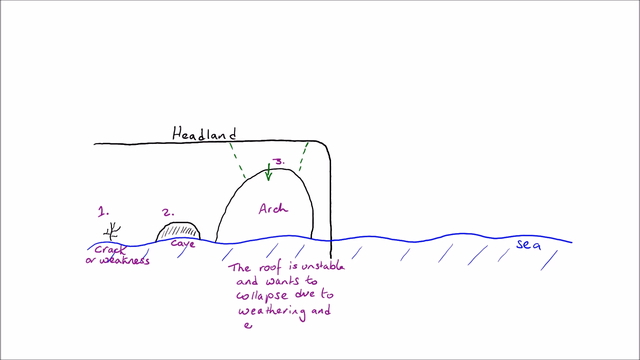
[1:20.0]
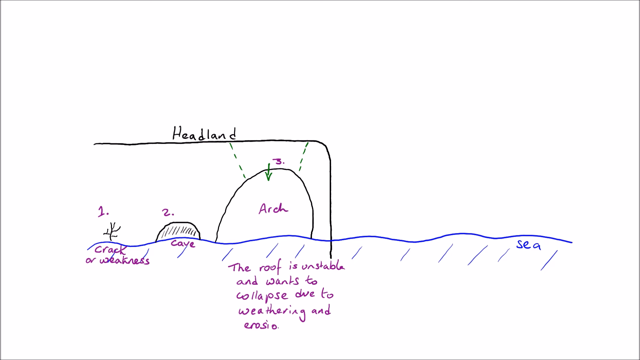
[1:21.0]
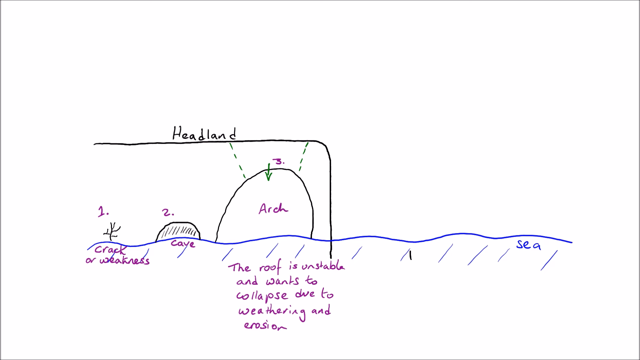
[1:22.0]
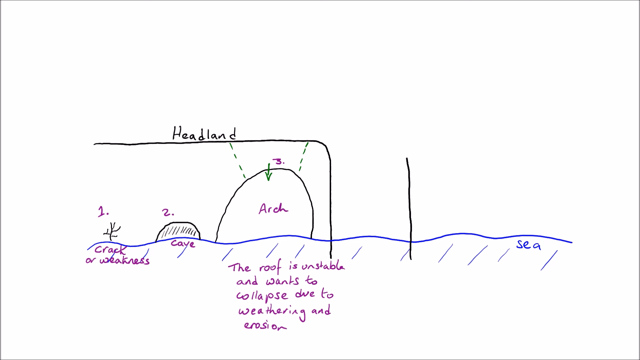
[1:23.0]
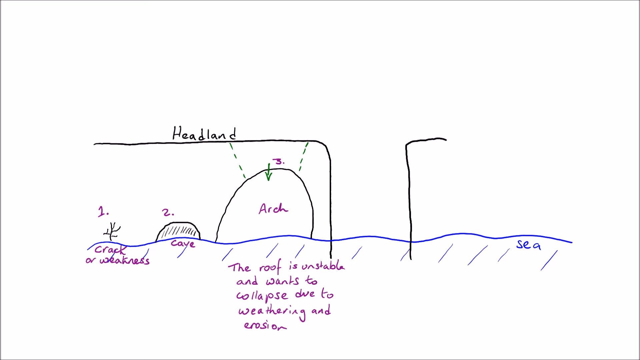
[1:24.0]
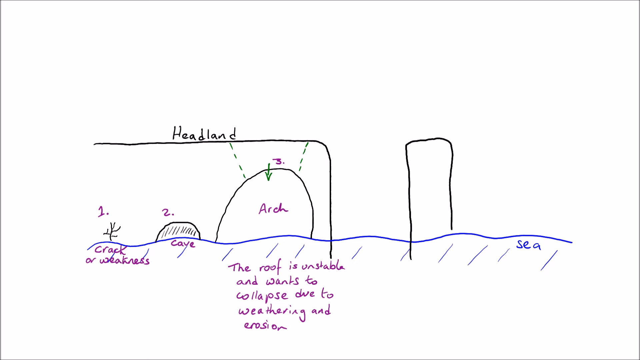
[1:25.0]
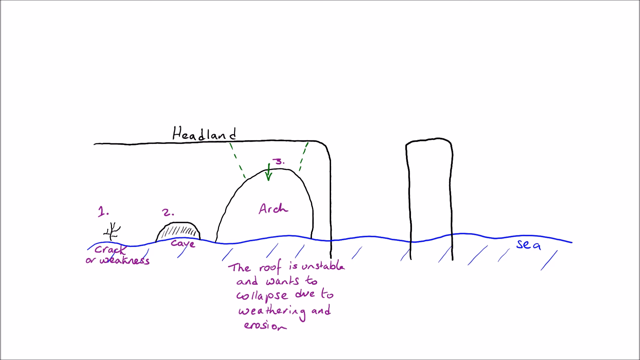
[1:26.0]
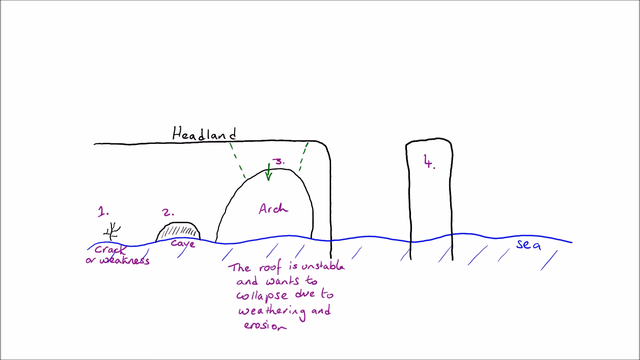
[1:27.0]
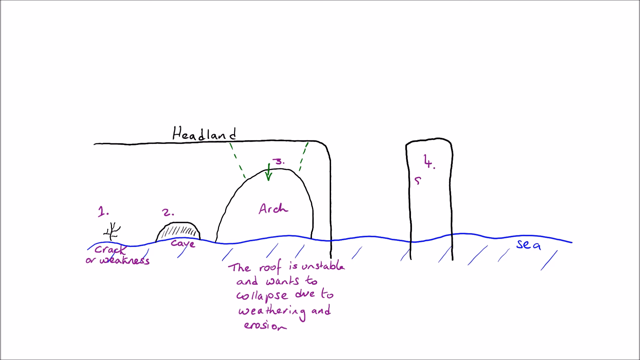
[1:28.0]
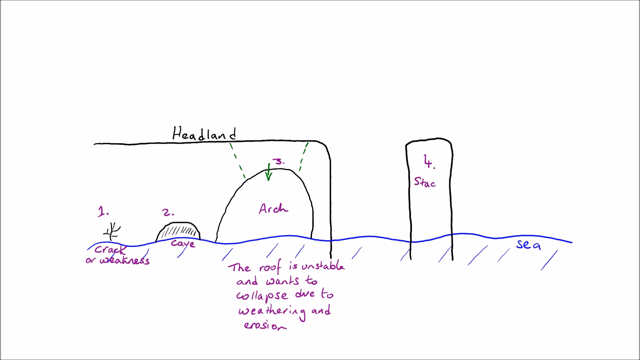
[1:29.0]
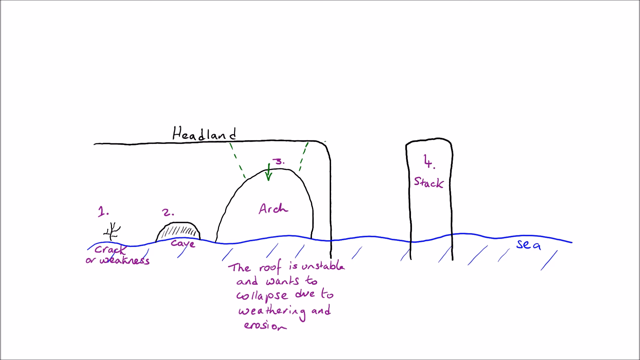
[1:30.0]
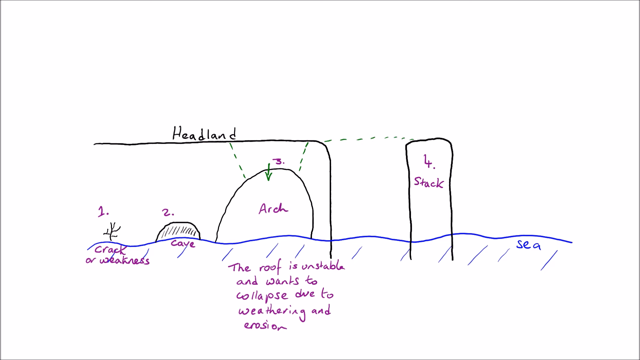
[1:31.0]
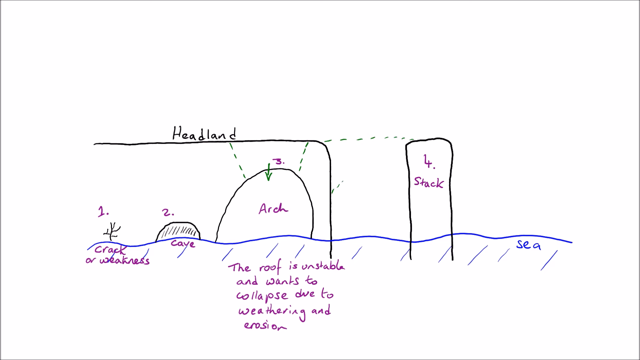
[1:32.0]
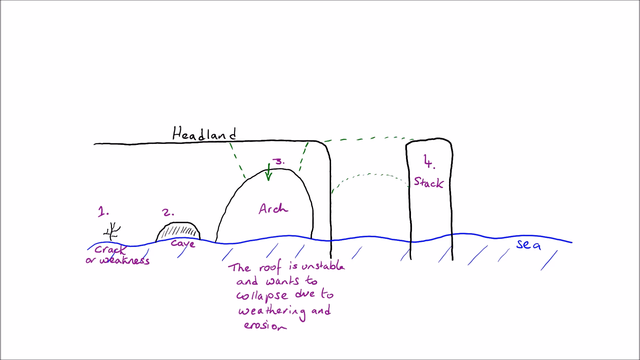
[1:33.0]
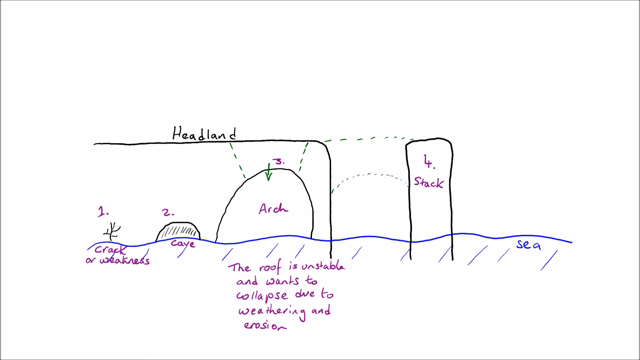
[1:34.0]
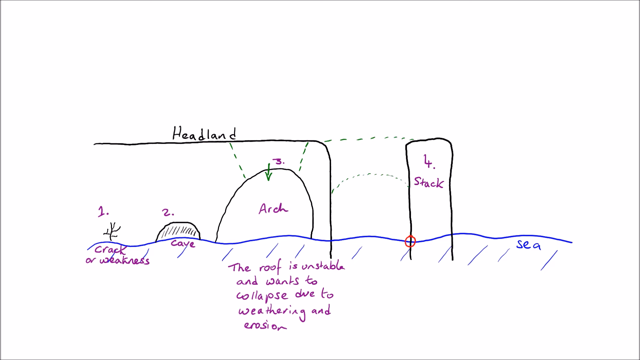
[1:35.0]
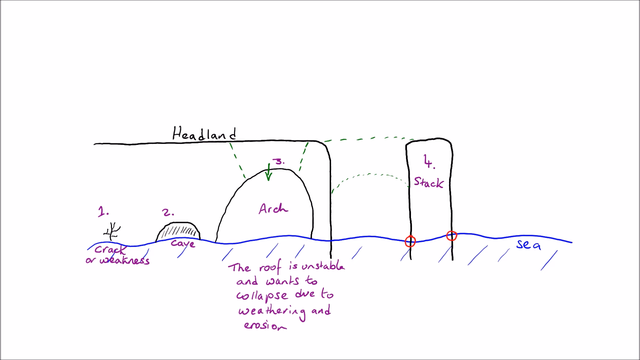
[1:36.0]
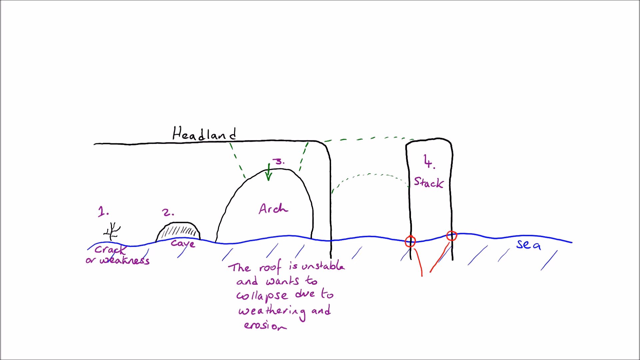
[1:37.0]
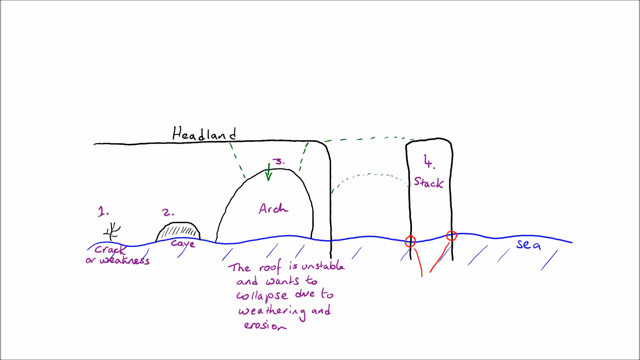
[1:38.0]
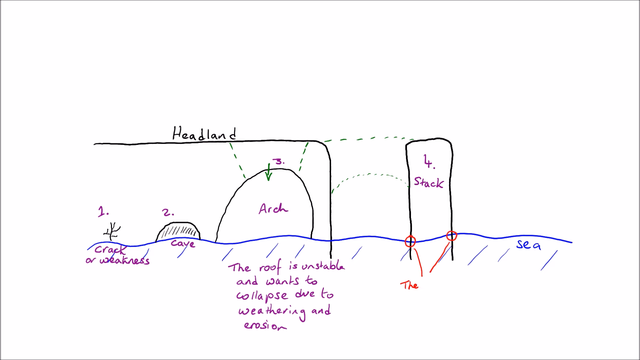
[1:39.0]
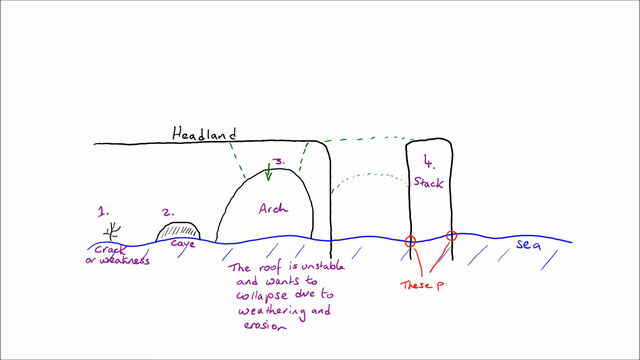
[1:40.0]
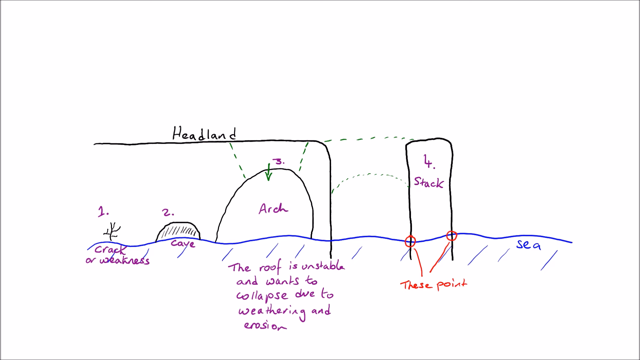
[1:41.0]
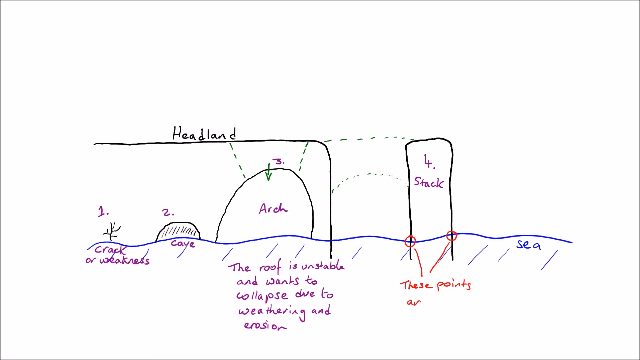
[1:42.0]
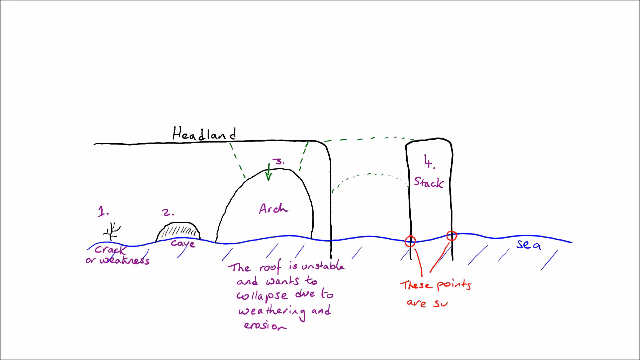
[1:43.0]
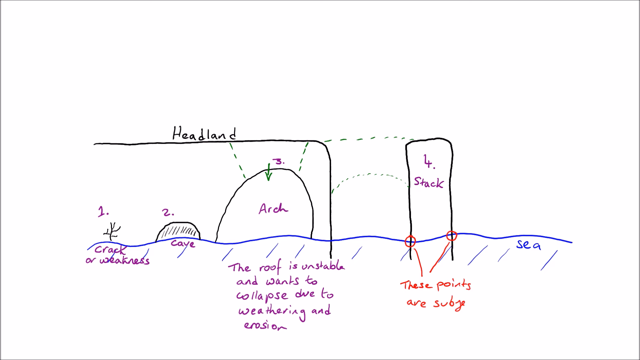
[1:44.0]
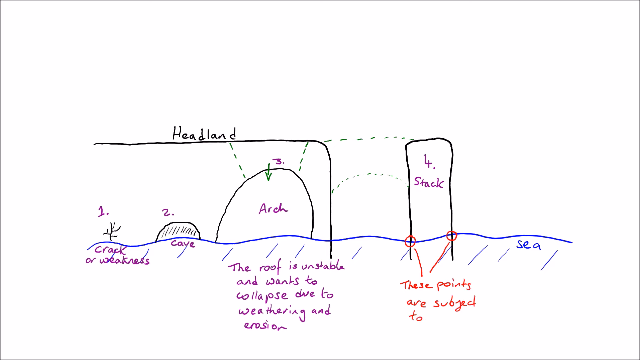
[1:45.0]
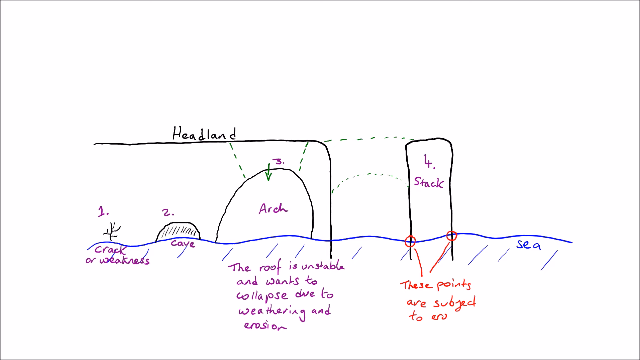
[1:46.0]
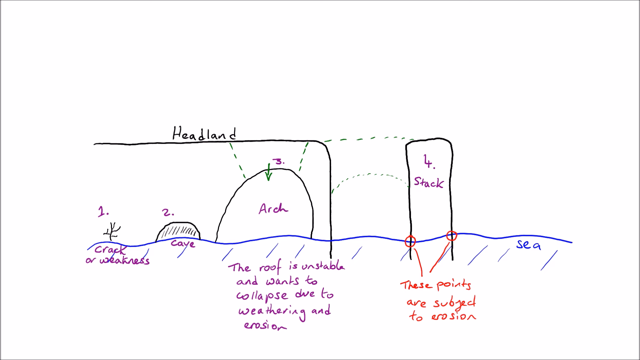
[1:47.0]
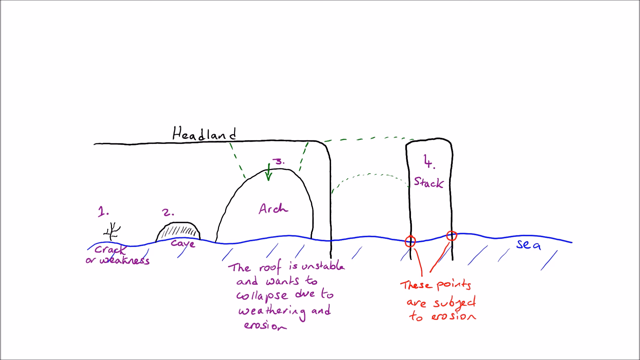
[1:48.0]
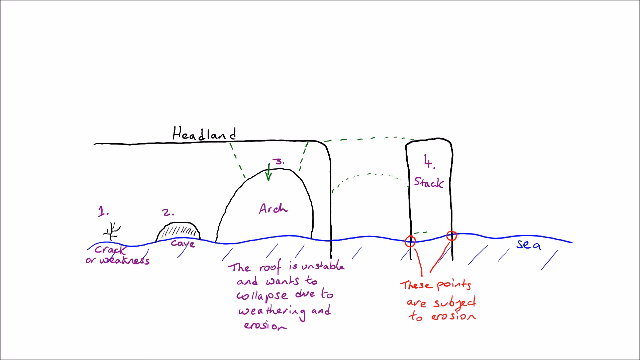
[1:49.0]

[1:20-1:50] The diagram shows the headland, the mountain-like structure, and the sea as blue wavy lines with rounded strokes. Number one is the crack or weakness, the smallest feature on the headland; number two is a cave, a small open structure; number three is the arc, with arrows pointing down at it, and text saying the roof is unstable and wants to collapse due to weathering and erosion. Number four, a stack, is added, apparently a part of the headland that has been separated from it. Text notes that the lowest points of the stack, at sea level, are subject to erosion.